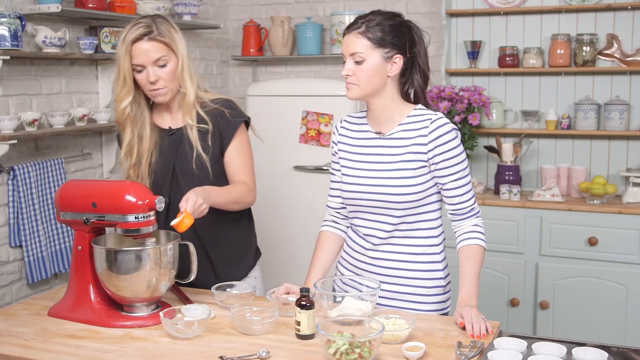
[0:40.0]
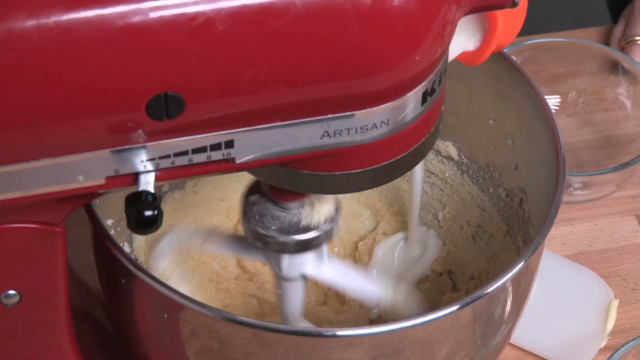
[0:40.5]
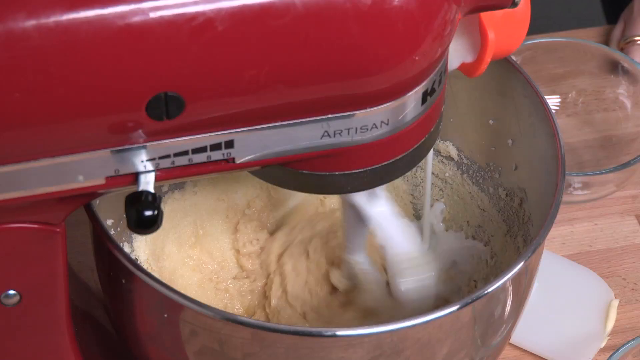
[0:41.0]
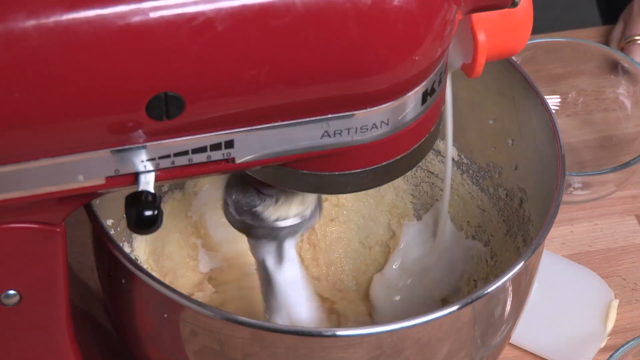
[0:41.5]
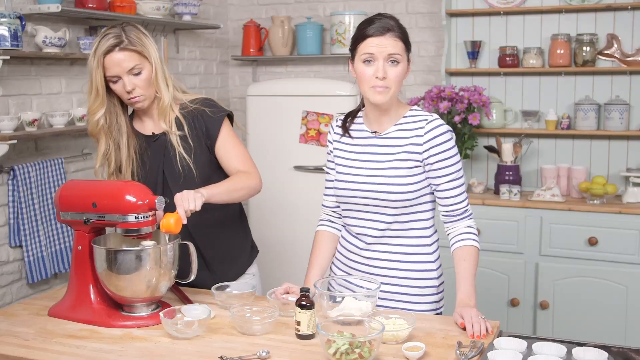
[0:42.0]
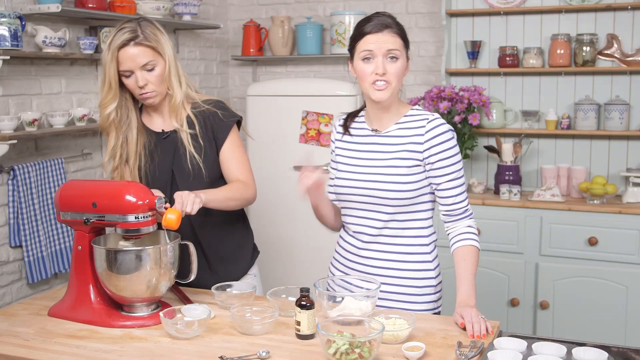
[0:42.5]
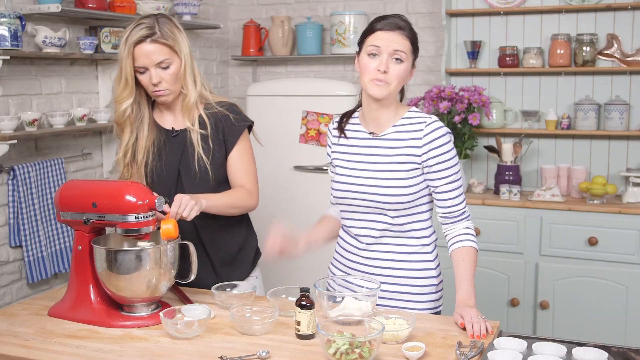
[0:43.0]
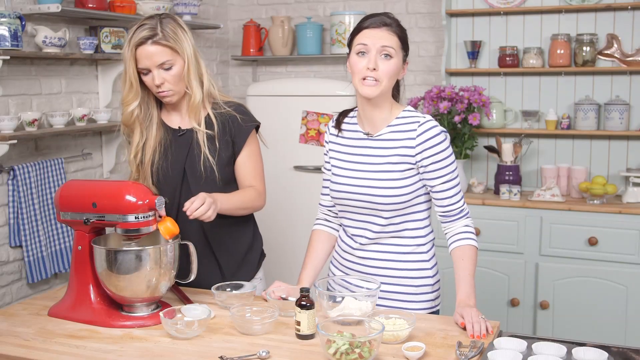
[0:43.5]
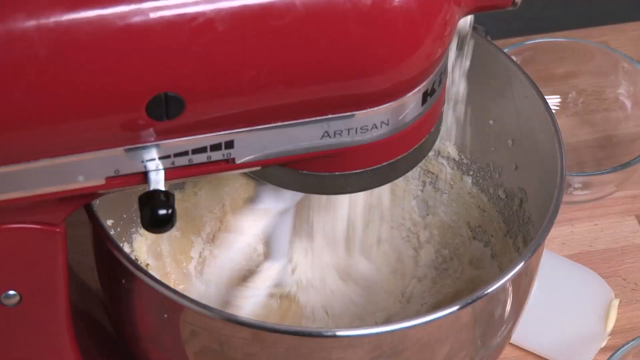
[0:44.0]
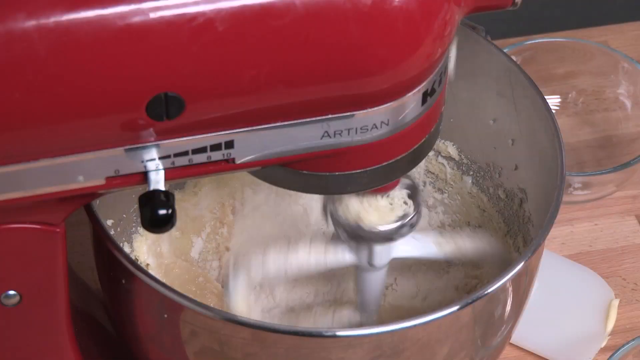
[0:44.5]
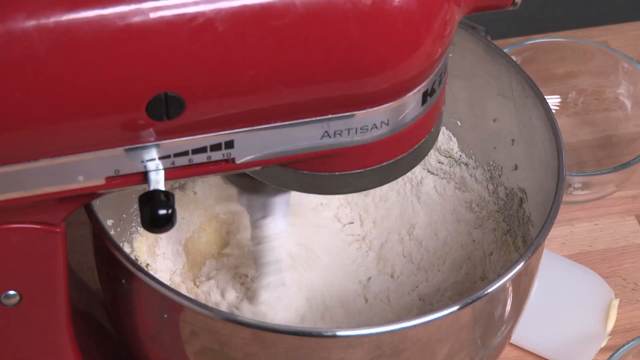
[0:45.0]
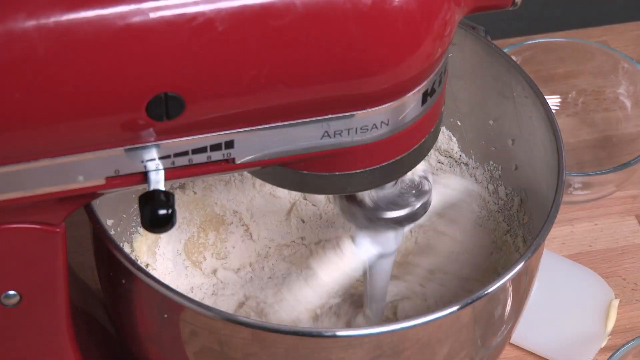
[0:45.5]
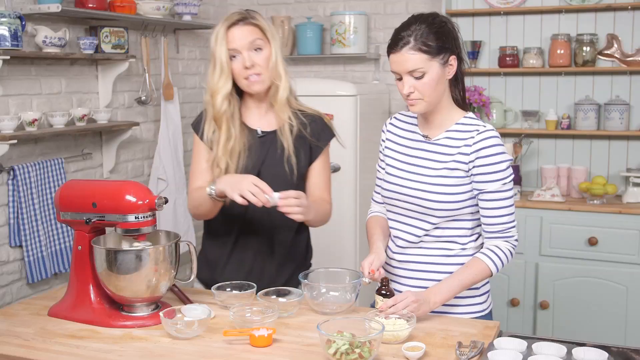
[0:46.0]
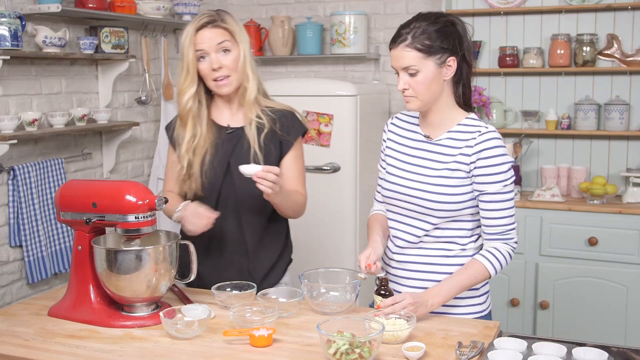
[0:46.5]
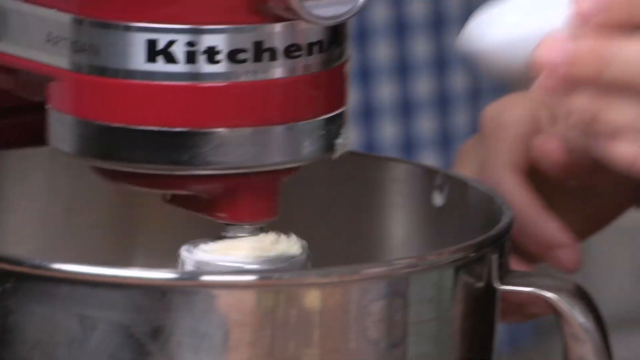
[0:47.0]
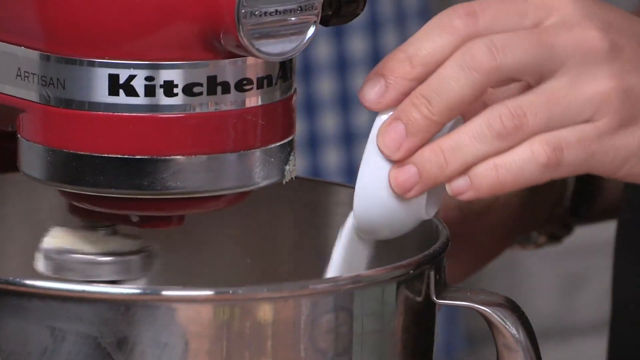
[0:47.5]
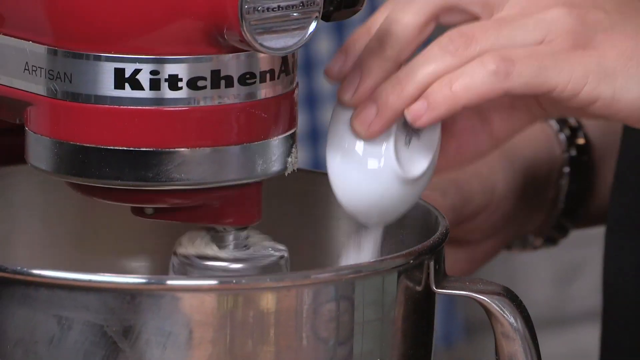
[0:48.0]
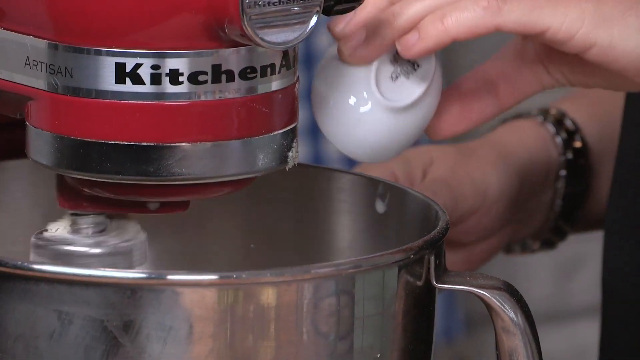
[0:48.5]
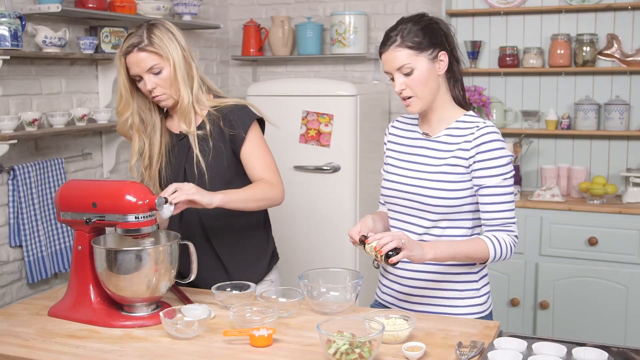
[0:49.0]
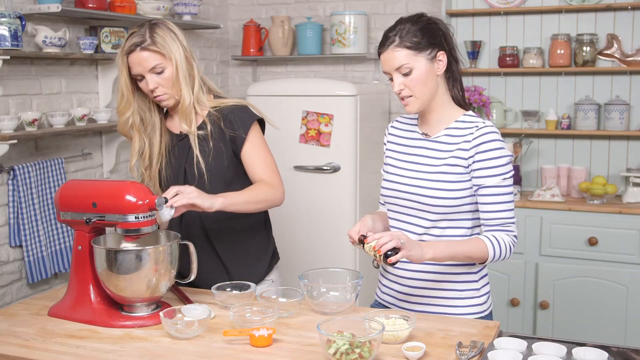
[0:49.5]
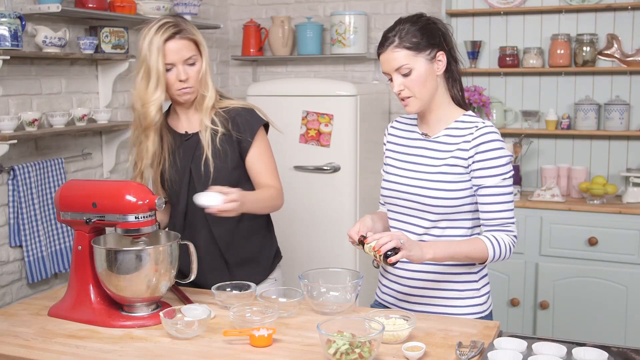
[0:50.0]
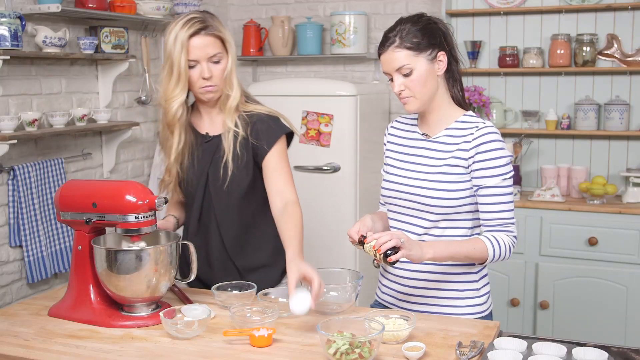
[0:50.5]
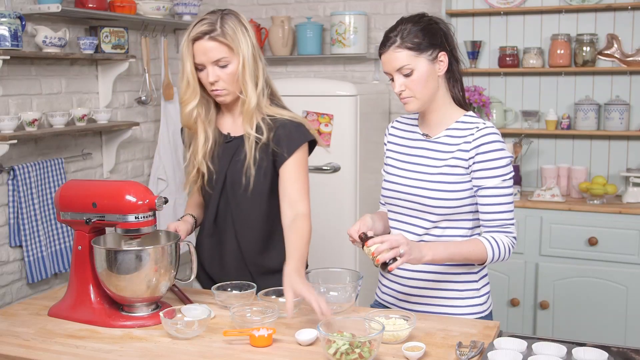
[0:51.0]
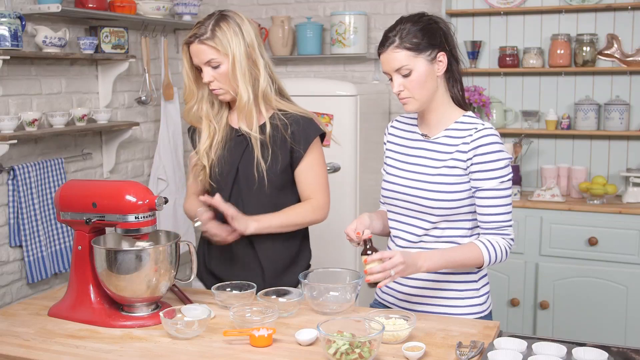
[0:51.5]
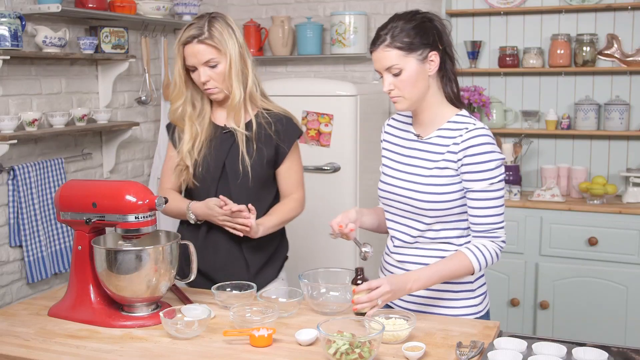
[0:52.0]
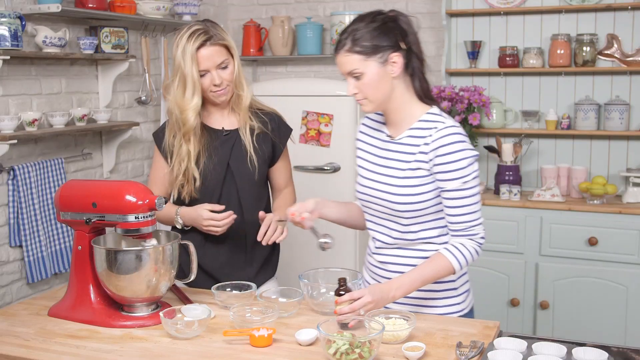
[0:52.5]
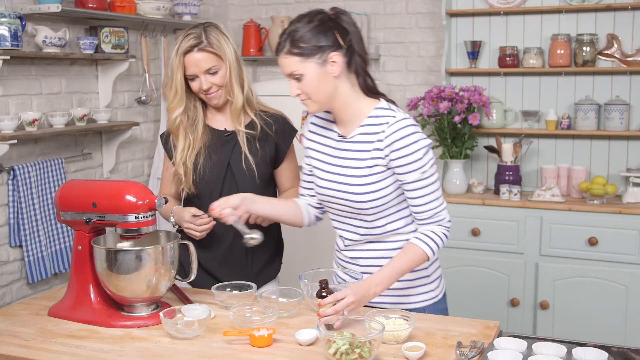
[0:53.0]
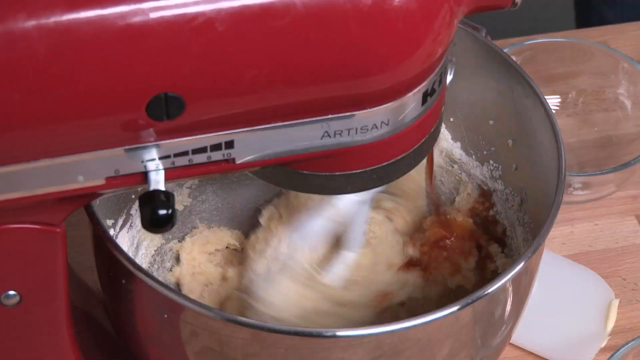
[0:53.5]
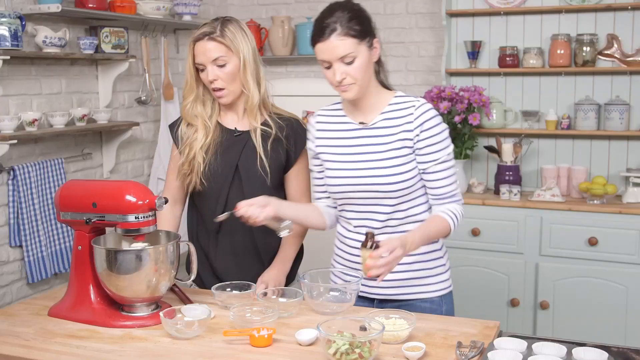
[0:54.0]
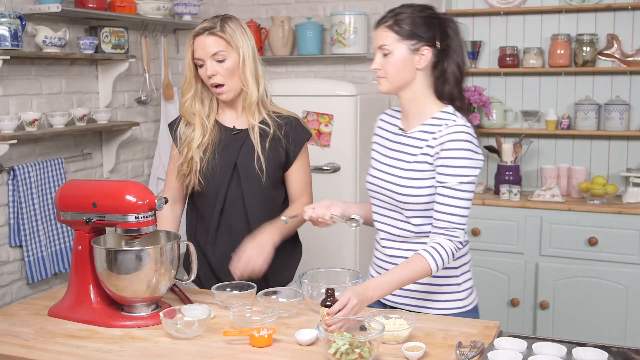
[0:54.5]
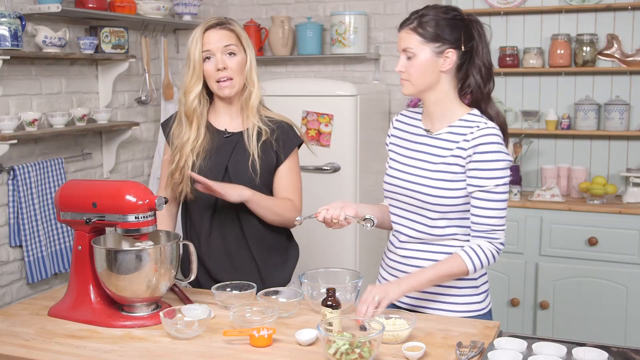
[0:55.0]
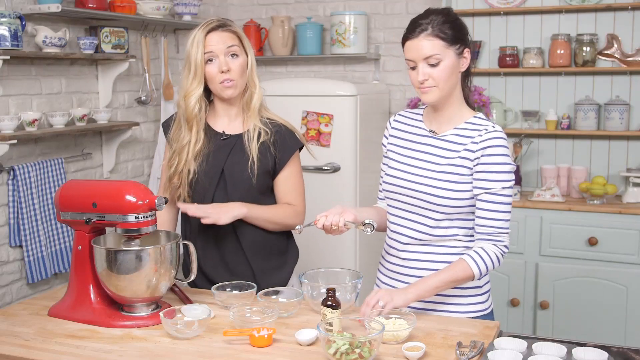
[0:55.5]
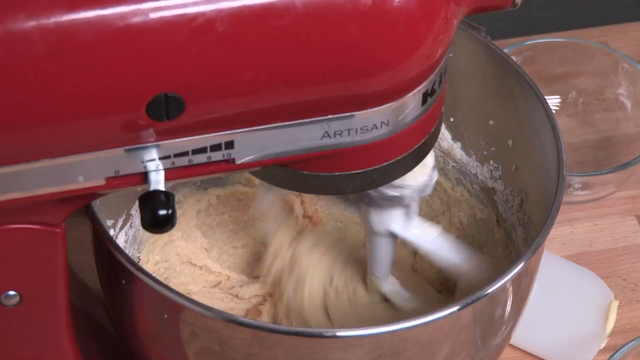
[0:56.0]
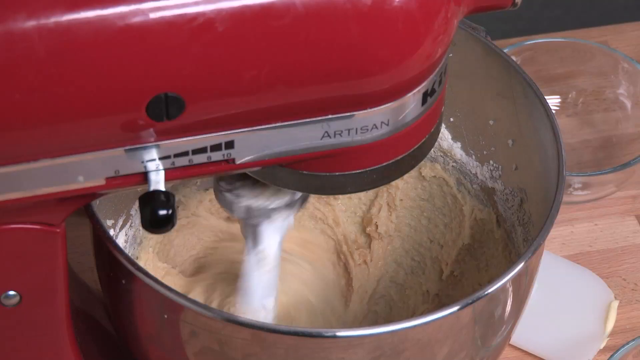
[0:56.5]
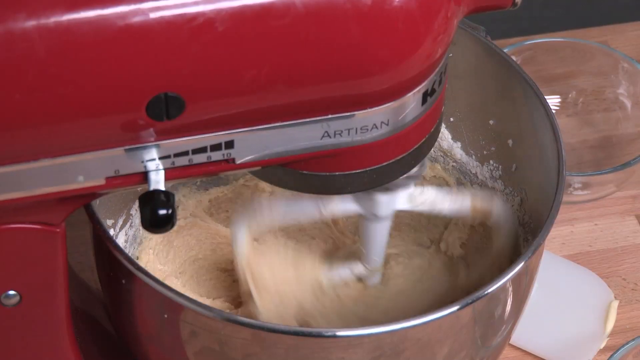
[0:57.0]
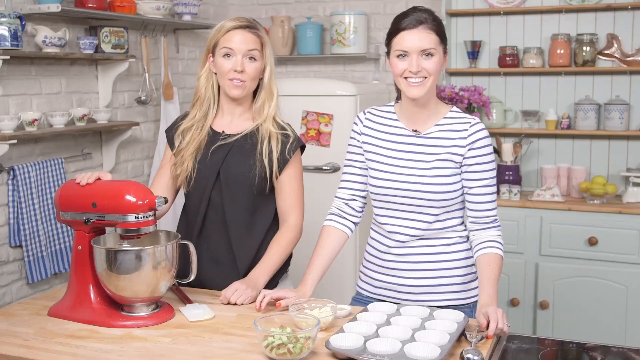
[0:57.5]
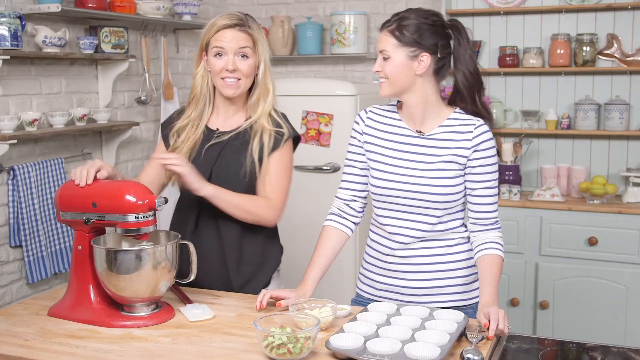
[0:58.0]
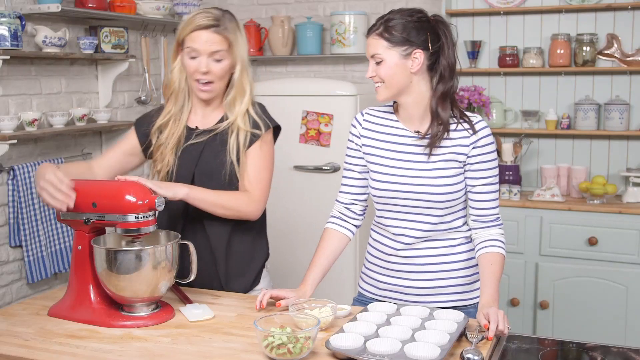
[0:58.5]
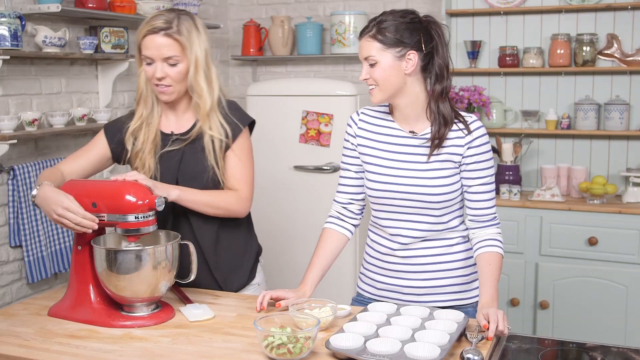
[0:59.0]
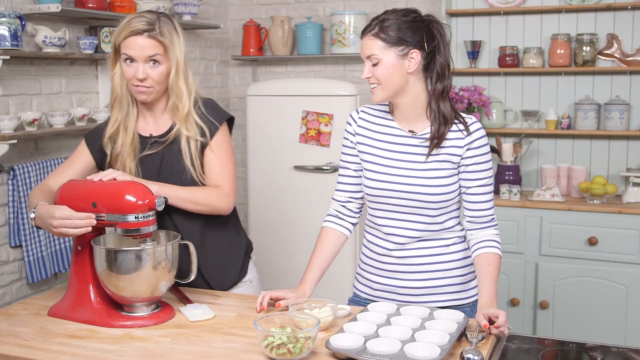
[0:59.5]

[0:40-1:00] A lady seems to be pouring different ingredients into the mixture, including some type of cream and some sort of powder. The one on the right seems to be doing all the work. The lady on the left, with black hair, seems to pick up some extract of some sort and pour it into the mixture. They set the mixer to a higher speed.